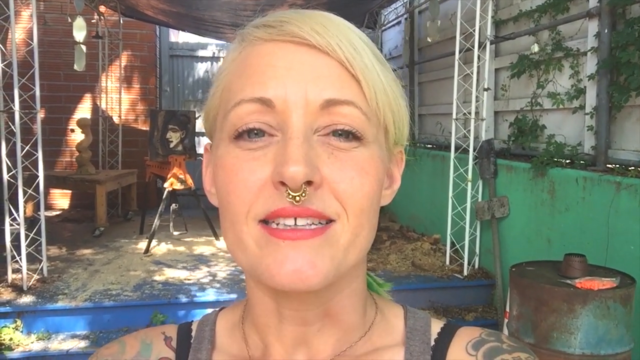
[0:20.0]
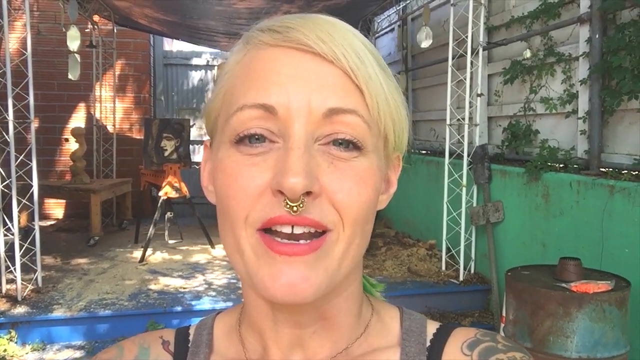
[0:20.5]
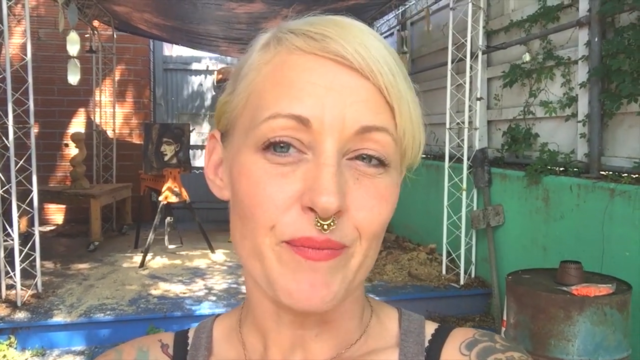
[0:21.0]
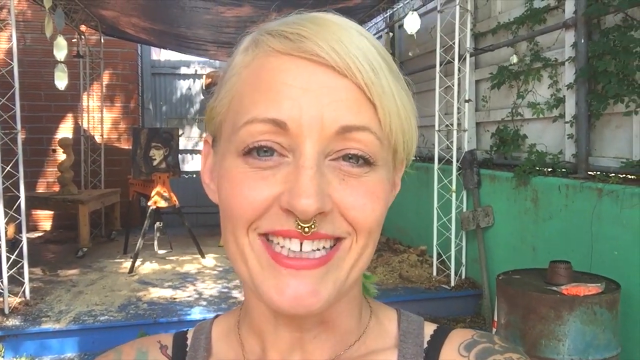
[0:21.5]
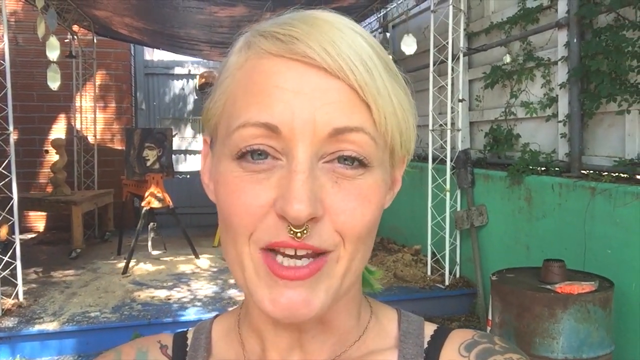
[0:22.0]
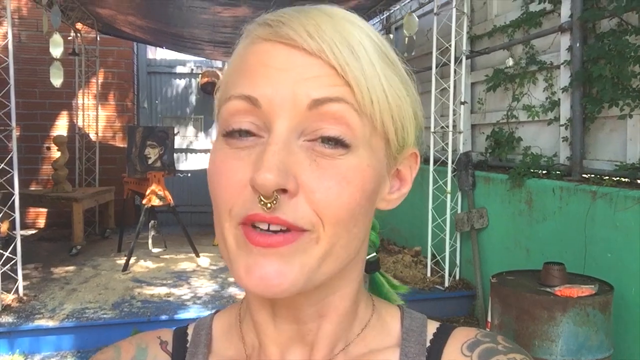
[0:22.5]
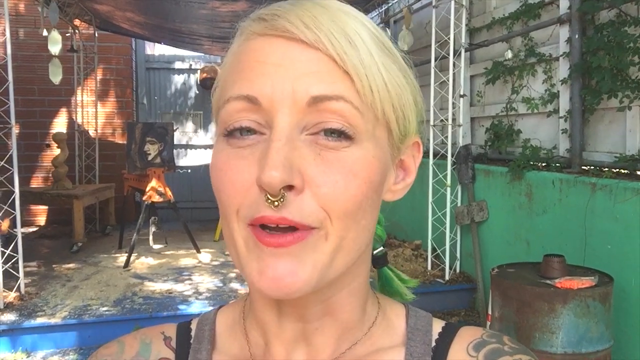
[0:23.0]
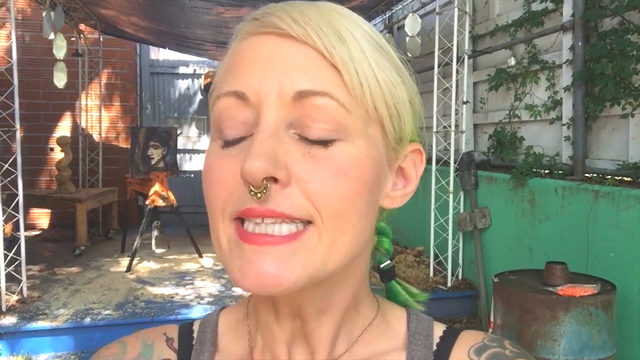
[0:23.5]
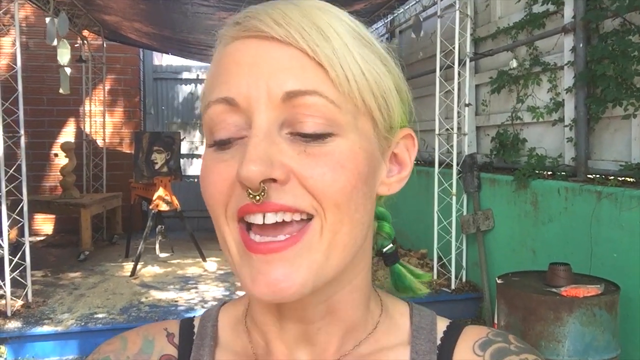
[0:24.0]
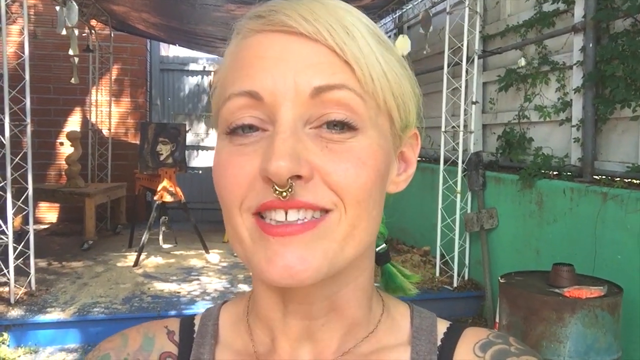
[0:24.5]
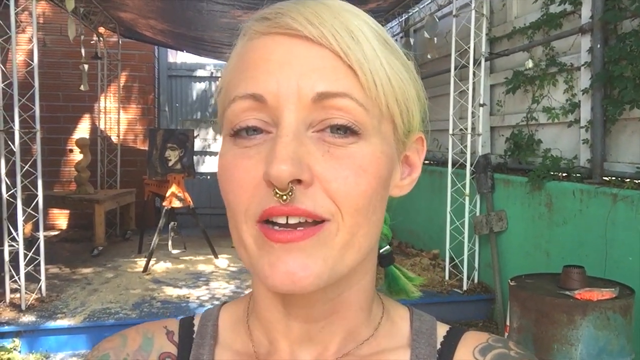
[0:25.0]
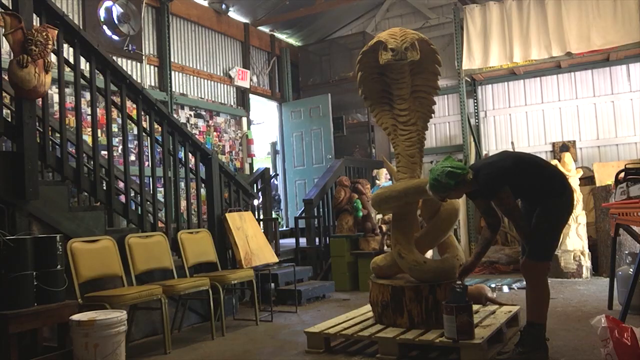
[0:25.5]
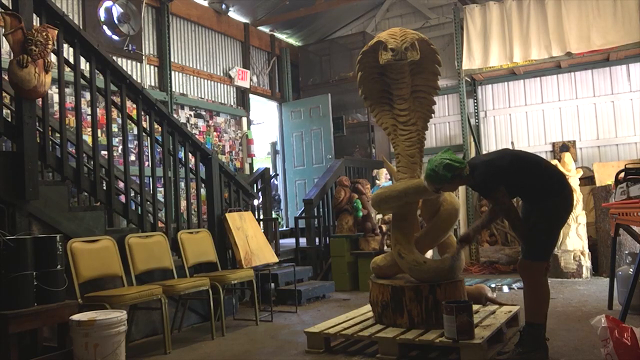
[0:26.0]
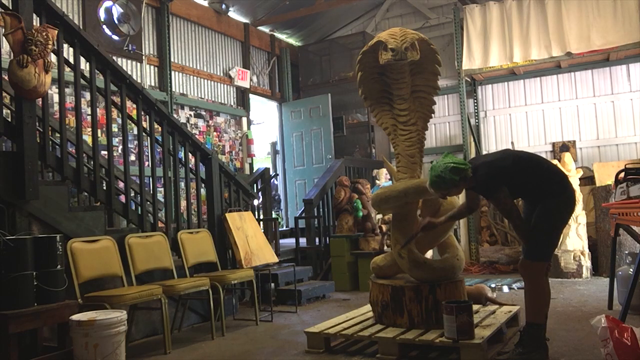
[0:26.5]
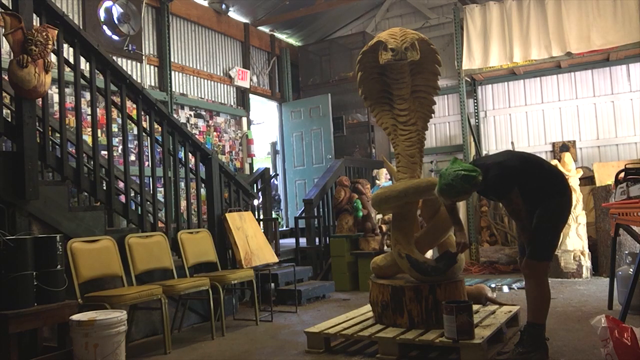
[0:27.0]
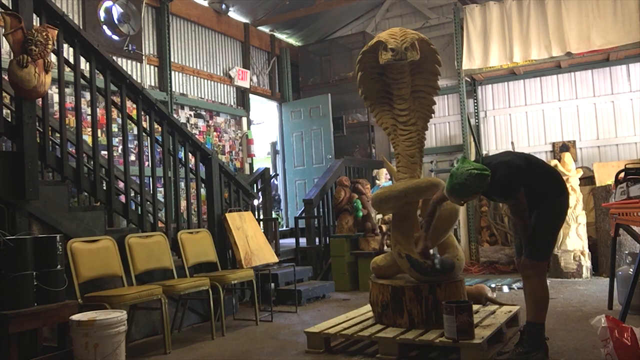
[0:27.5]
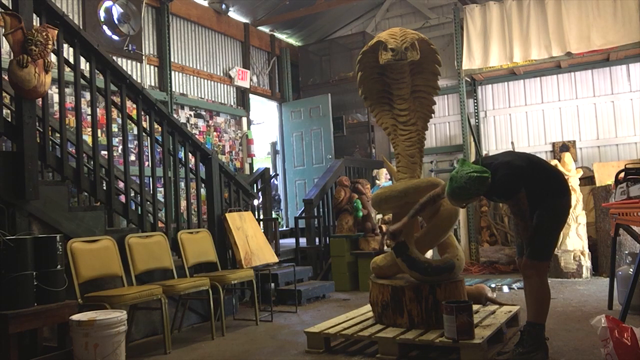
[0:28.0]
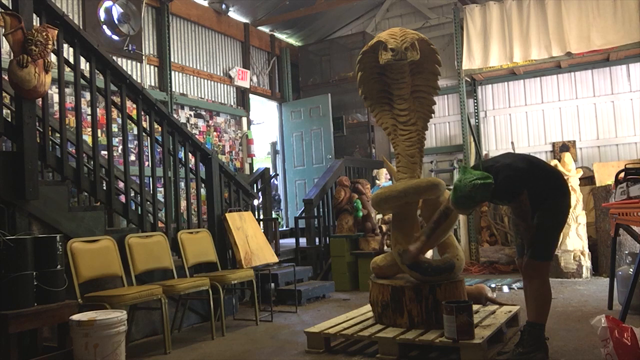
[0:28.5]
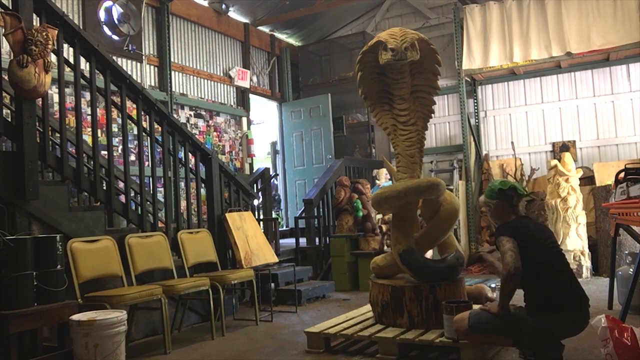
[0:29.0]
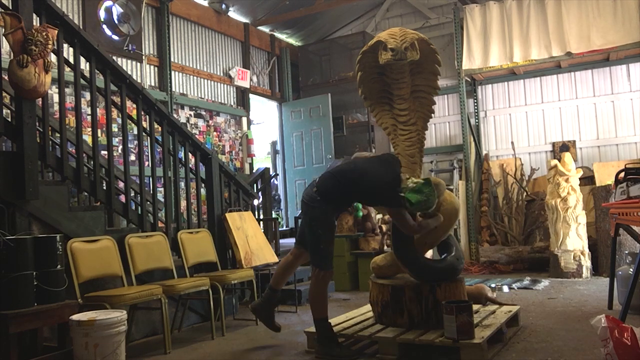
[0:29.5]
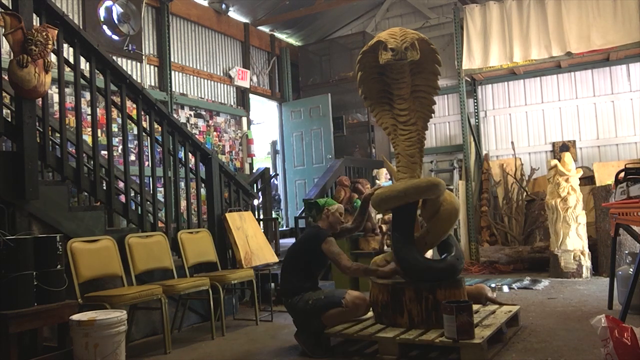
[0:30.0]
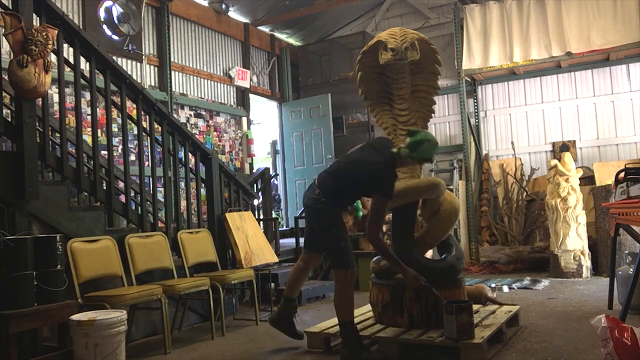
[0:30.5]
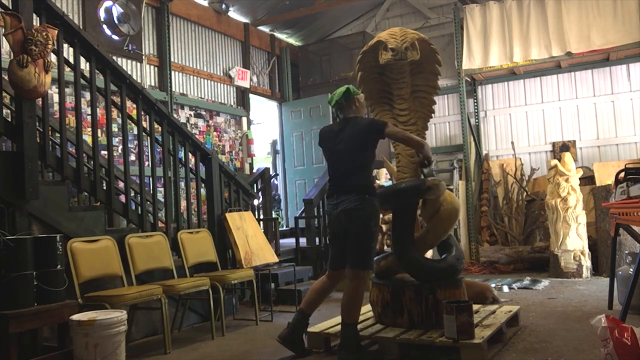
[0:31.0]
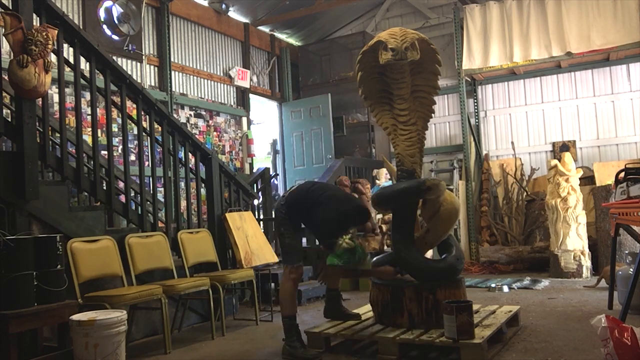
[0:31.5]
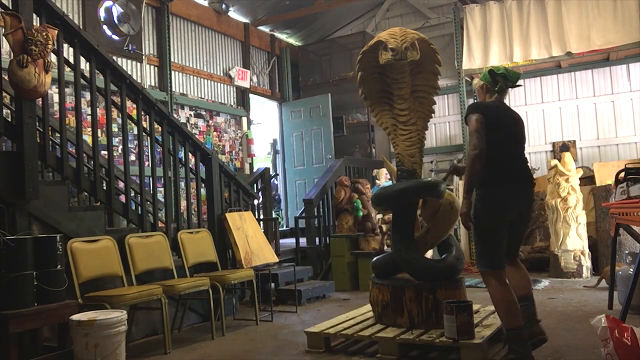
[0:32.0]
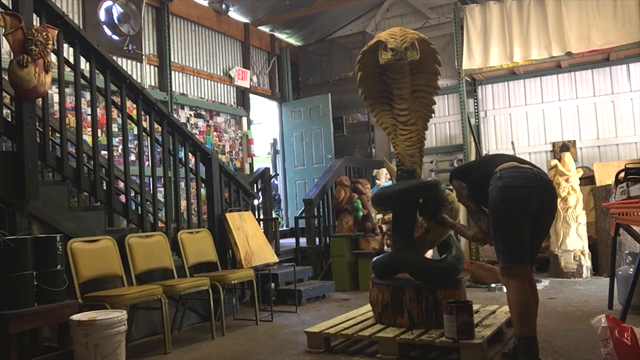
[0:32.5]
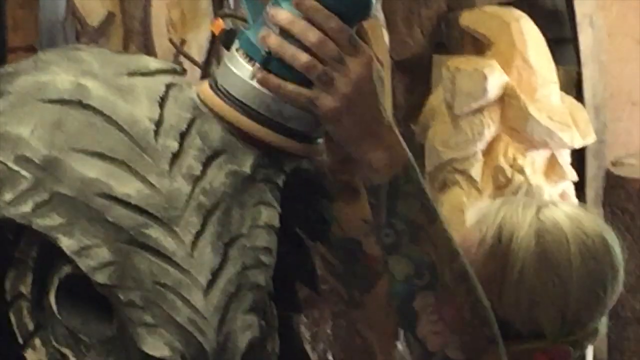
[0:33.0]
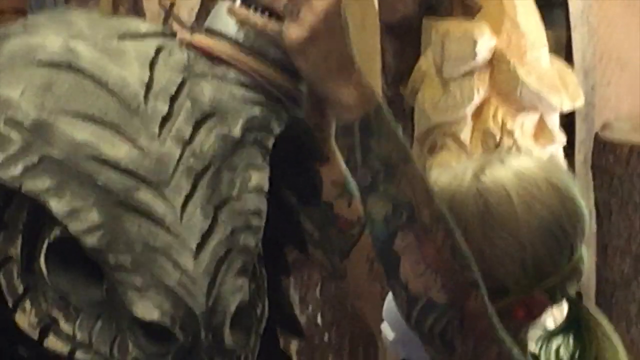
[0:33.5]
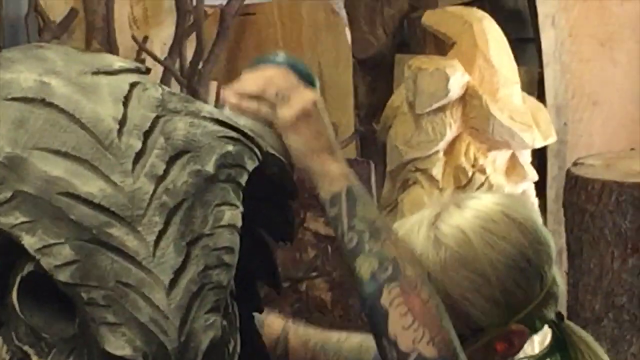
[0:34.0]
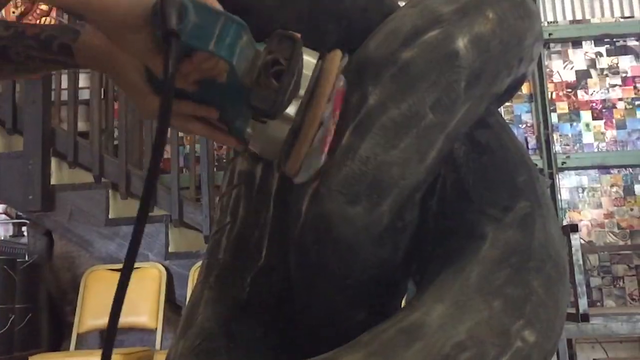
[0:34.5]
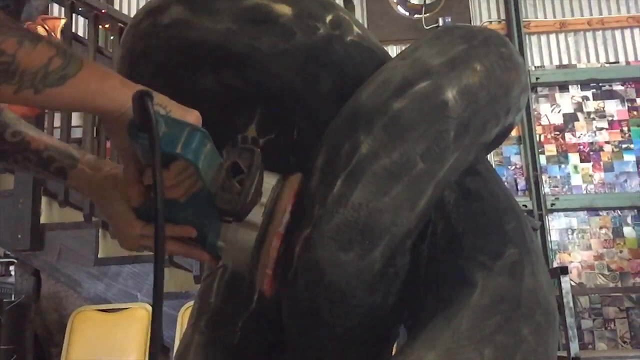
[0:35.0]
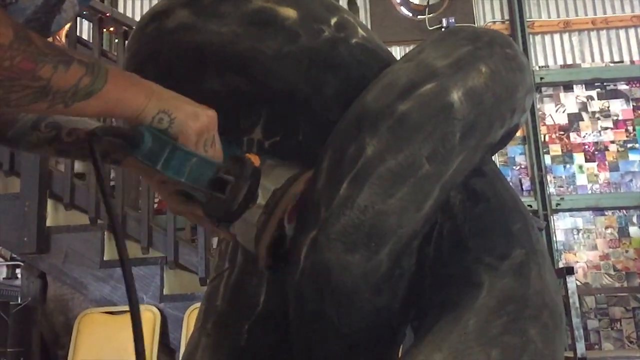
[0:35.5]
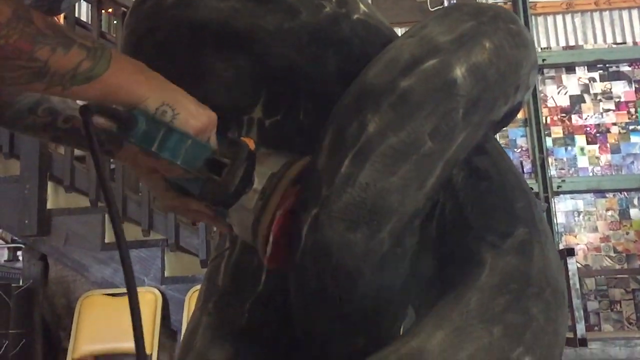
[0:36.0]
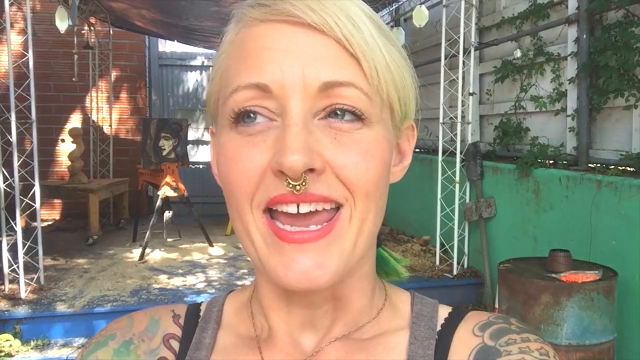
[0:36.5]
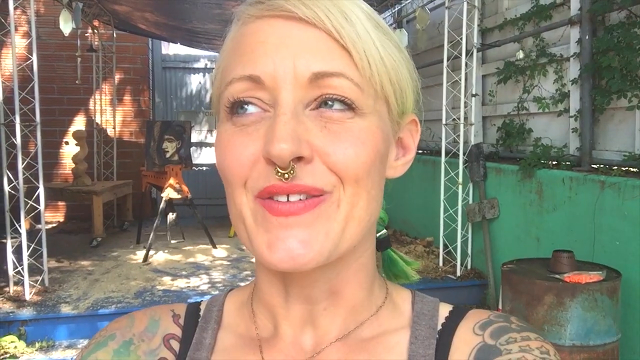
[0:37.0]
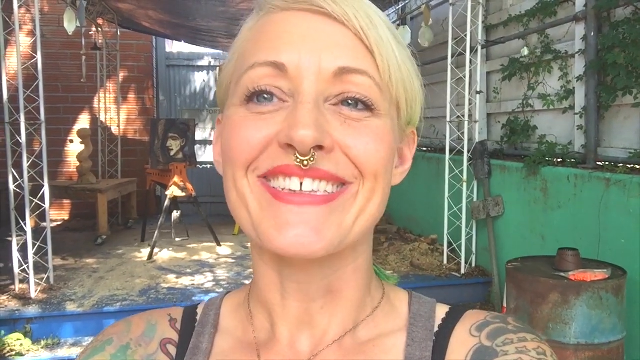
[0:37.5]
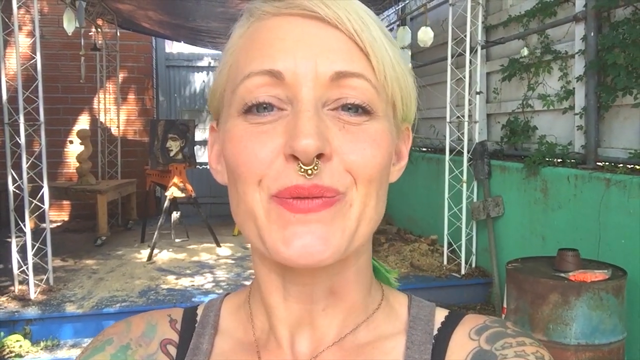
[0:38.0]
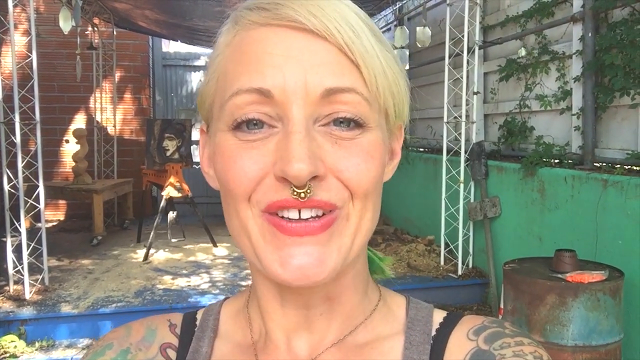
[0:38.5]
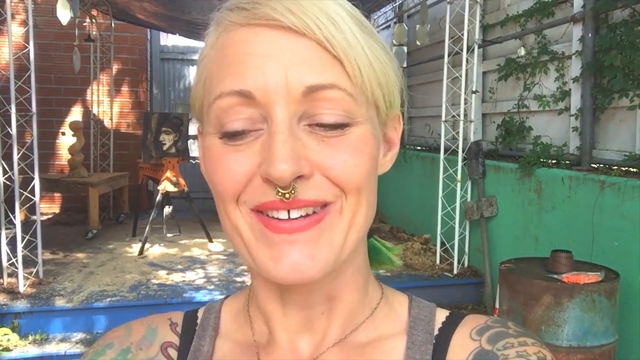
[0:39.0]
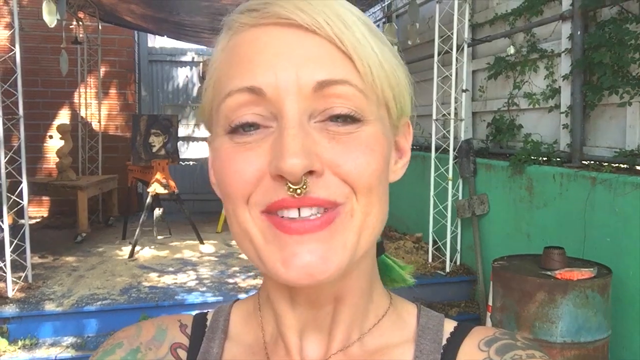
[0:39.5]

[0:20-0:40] In the garden, the woman continues talking to the camera, moving her head to the right and back round again. She smiles as she speaks, as if what she is saying is very amusing, as though sharing a joke with the audience. The video cuts to the inside of the house, a studio, where she bends over and brushes the base of the snake wood carving, painting it green. The footage speeds up, showing her at either side of the snake, and the paint becomes more obvious as she works from the bottom upwards. She then stands very close to the snake using a sander, raised above her head and held tightly with both hands; her hands move downwards and then backwards. Another angle shows the carving being sanded, with the hands grasping the sander from underneath. She has tattoos on her hands. The video cuts back to the garden, where she smiles and talks enthusiastically.